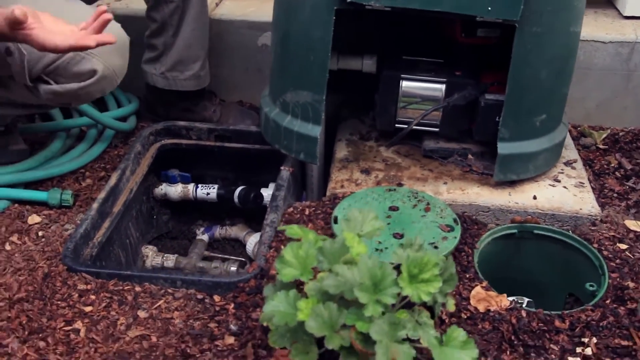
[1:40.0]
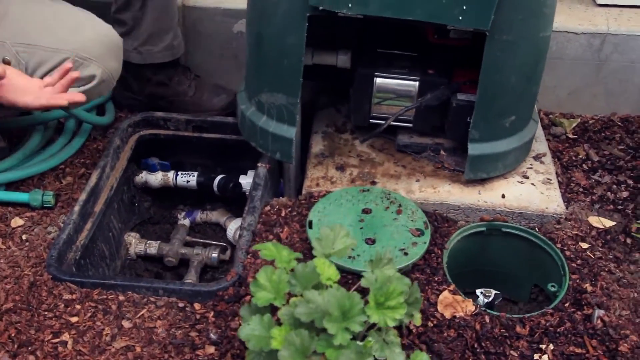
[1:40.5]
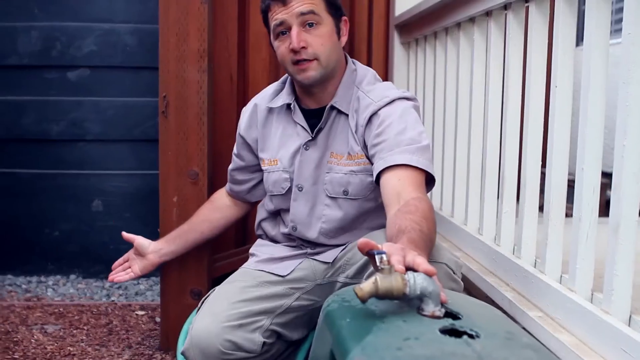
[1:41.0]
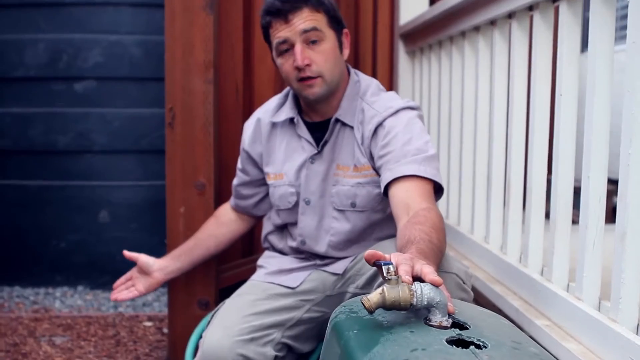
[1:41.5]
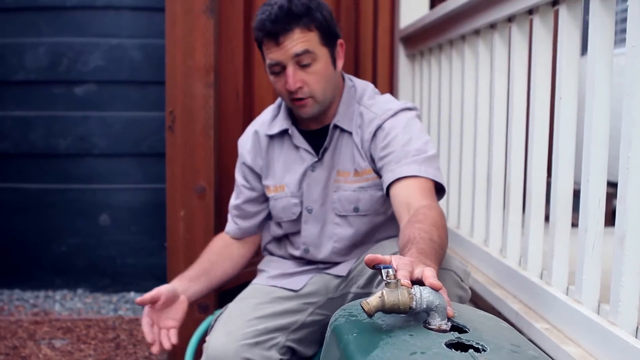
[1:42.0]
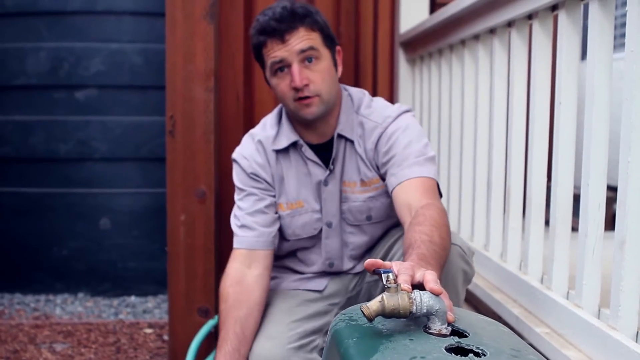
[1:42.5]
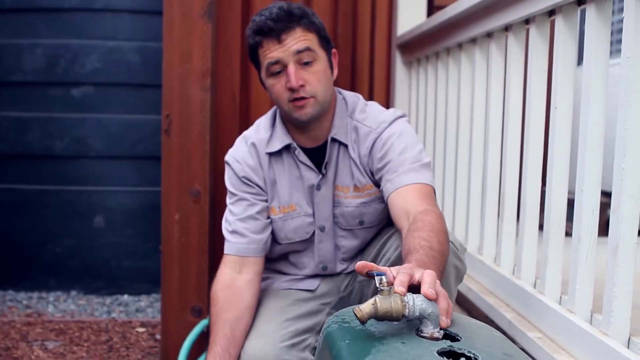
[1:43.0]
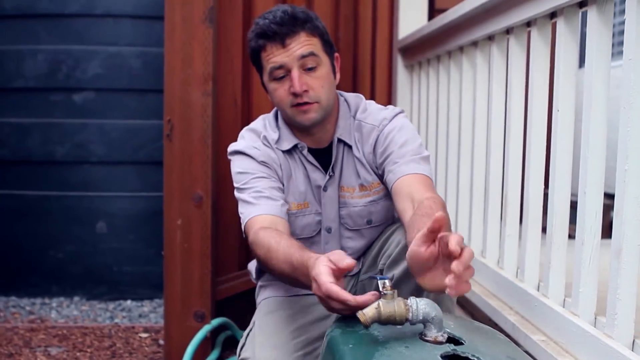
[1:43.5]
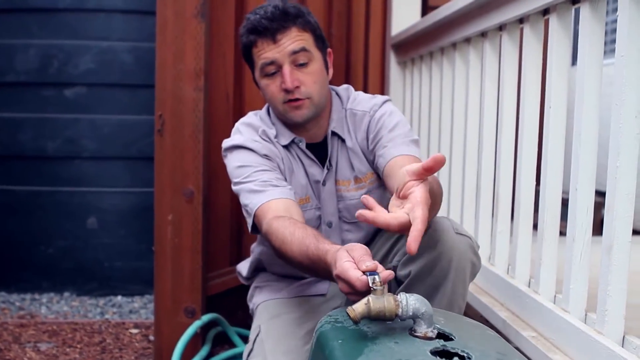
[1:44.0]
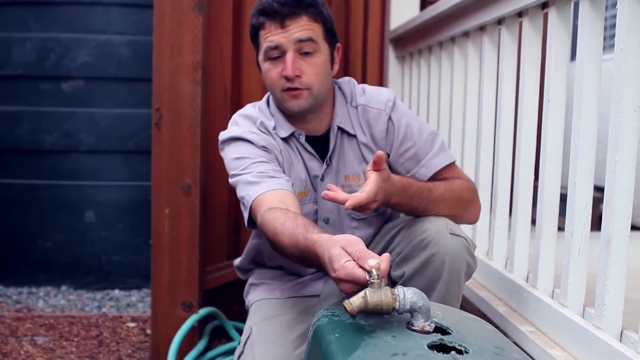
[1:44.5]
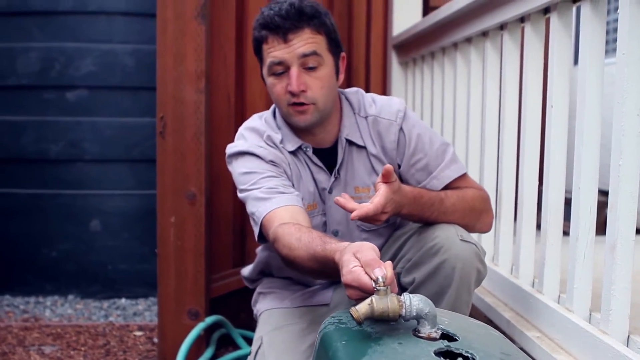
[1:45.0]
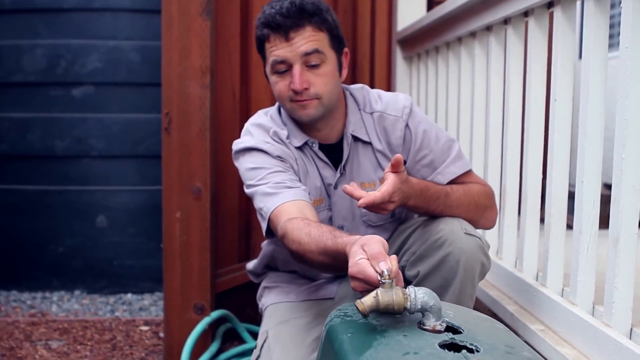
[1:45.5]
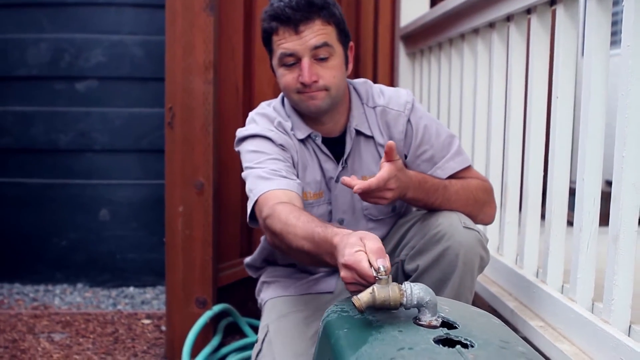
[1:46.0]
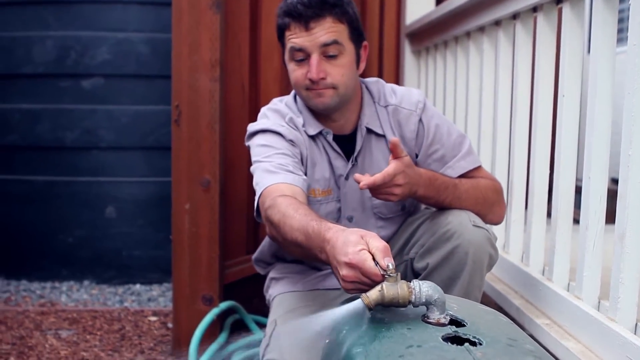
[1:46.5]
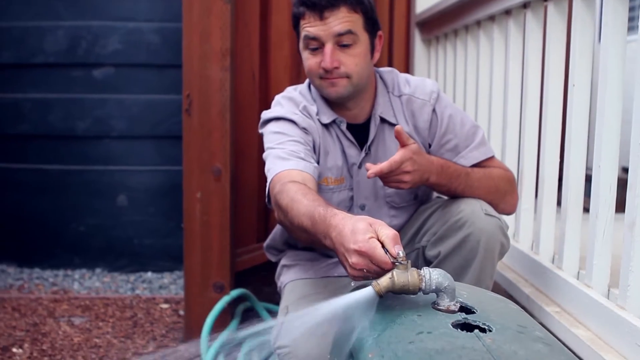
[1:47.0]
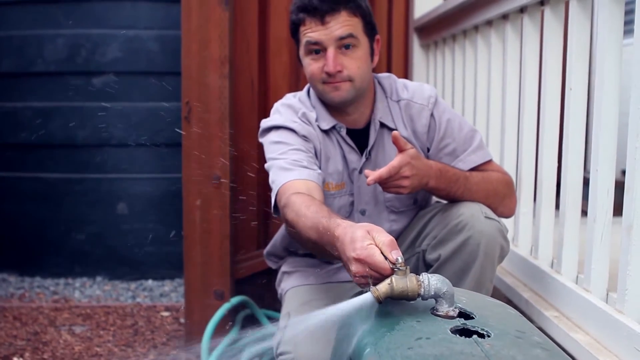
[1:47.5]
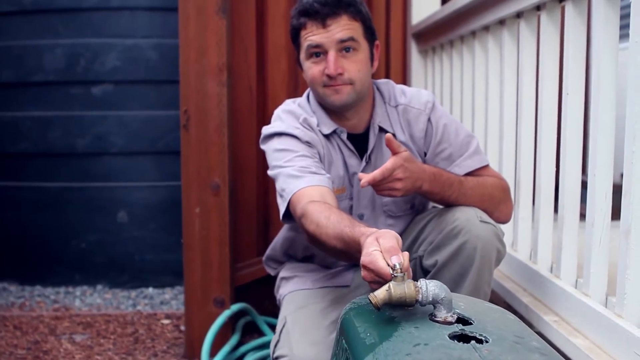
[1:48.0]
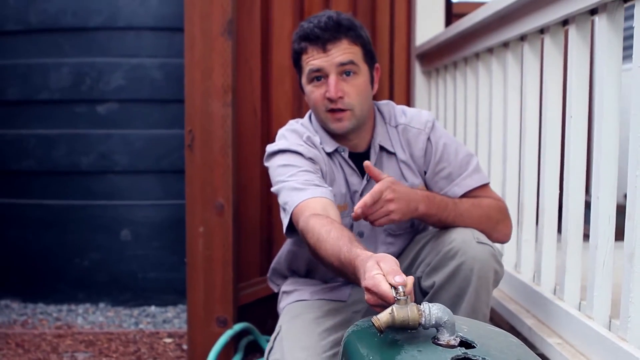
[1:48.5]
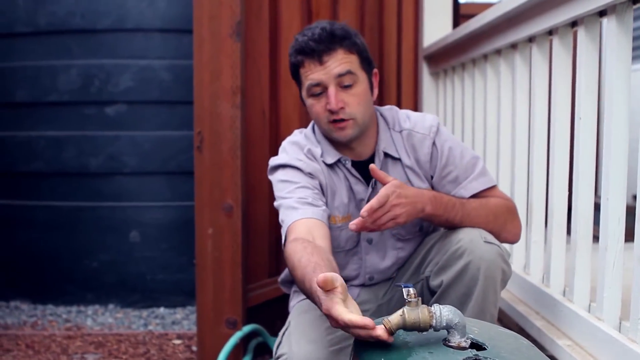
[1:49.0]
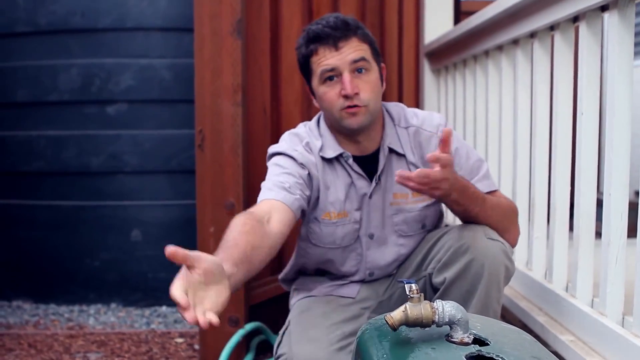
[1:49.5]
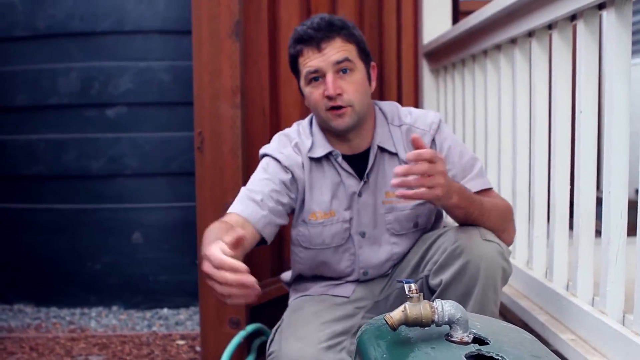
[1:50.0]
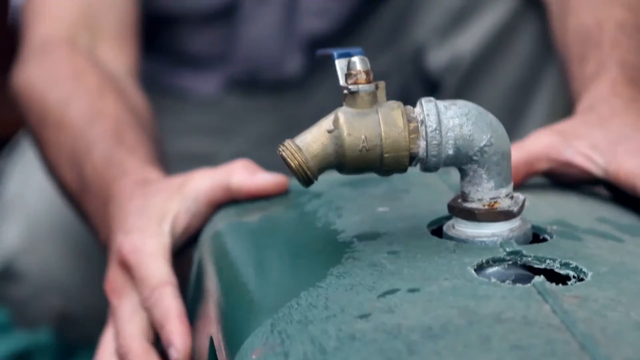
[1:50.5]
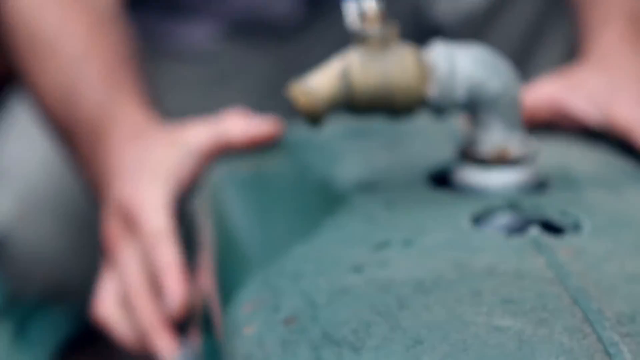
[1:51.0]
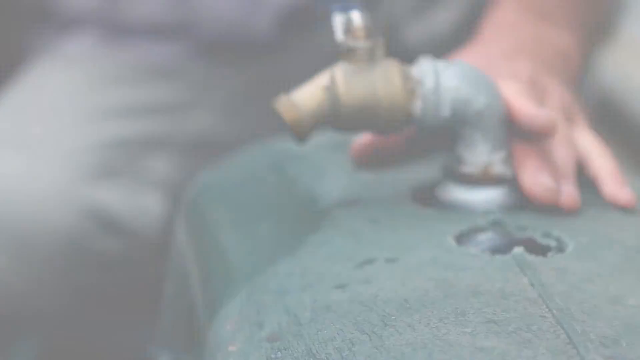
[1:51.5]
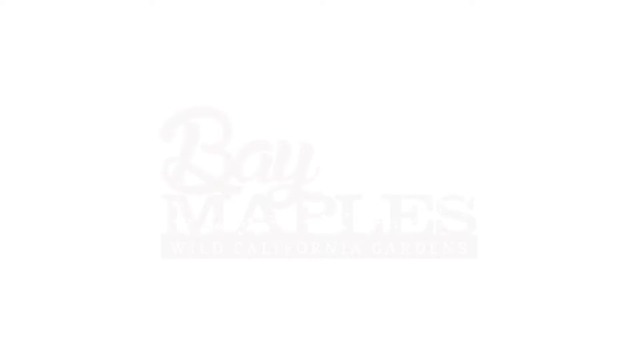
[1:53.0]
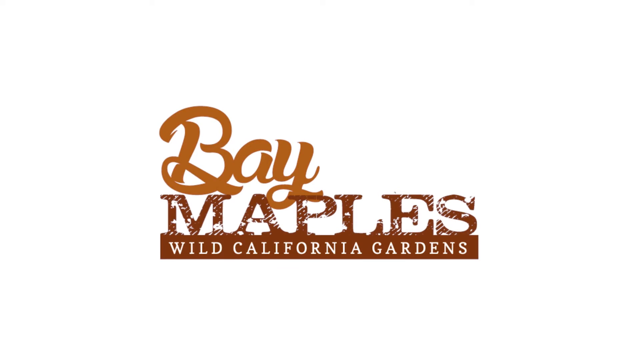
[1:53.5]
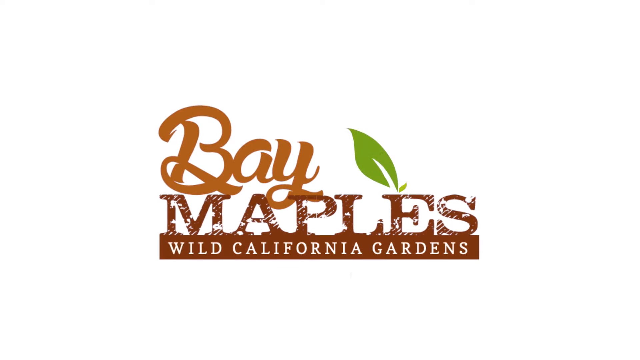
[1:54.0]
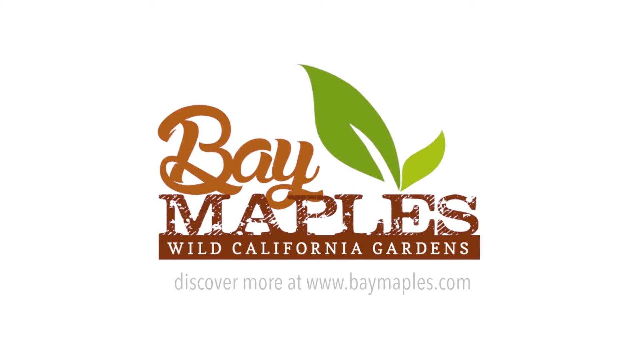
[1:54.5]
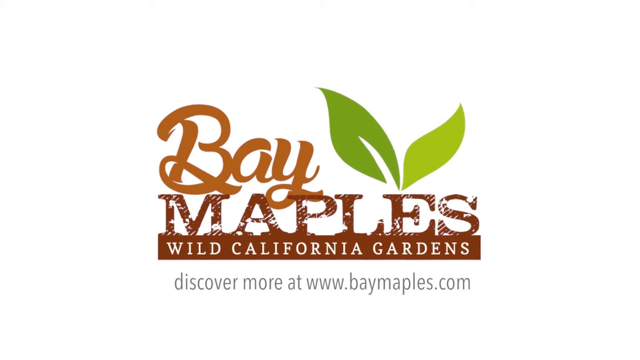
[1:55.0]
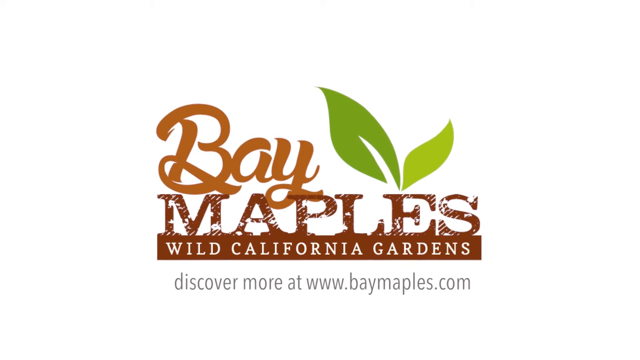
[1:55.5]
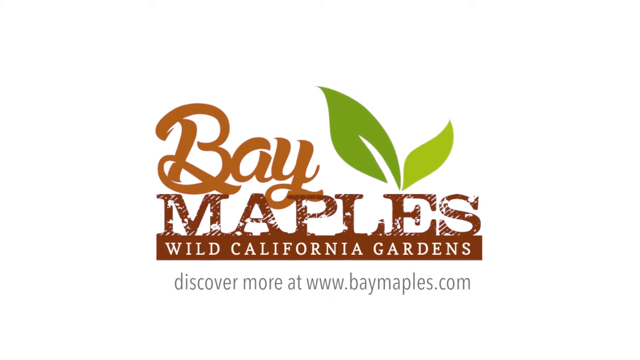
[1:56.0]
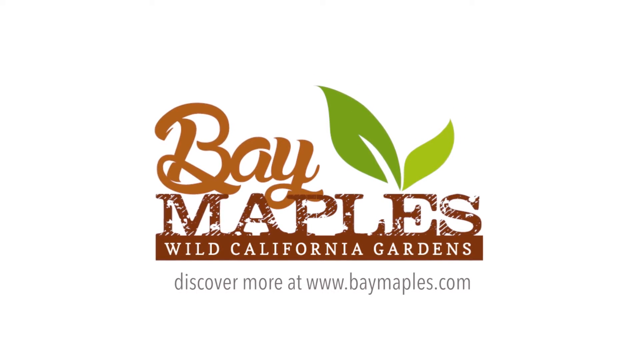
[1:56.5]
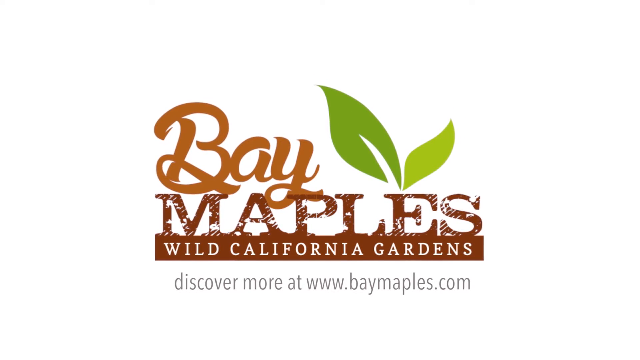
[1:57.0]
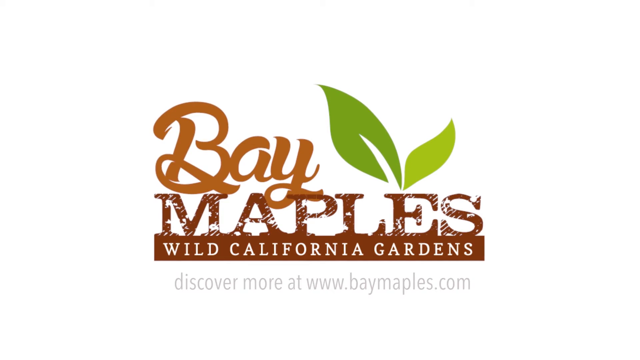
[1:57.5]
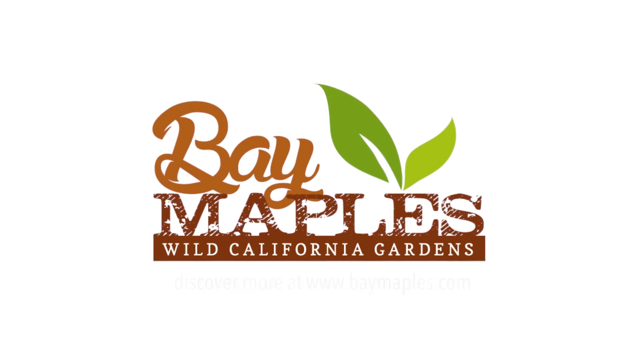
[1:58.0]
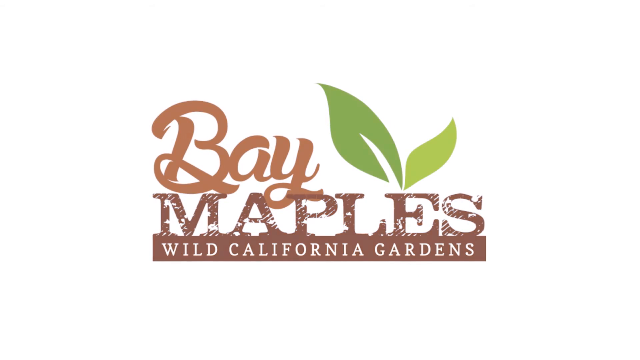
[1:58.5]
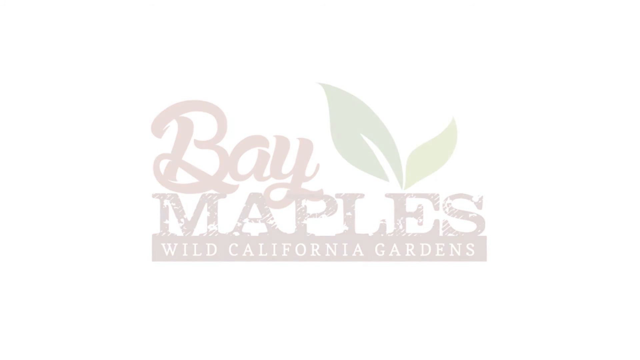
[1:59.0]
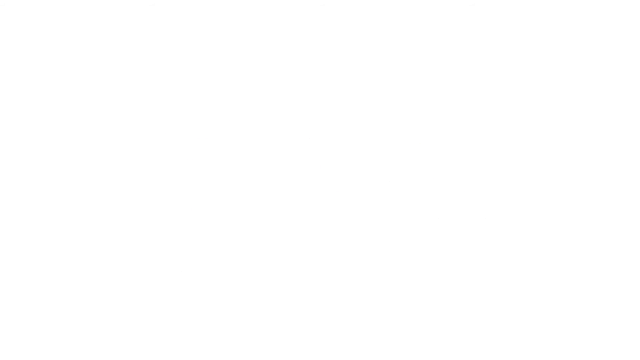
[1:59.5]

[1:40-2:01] A young man who looks to be in his early 30s, with a light complexion and short black hair, wears a grey shirt over a black t-shirt and cargo pants with two pockets on the sides. He squats down and opens what seems to be a tap, with water coming from a drum installed in the ground. A green hose pipe several meters long is there, and "Bay Maples" is written on it. It looks like an irrigation system. In the background there is a white staircase, and a brown wooden storage space is behind him.